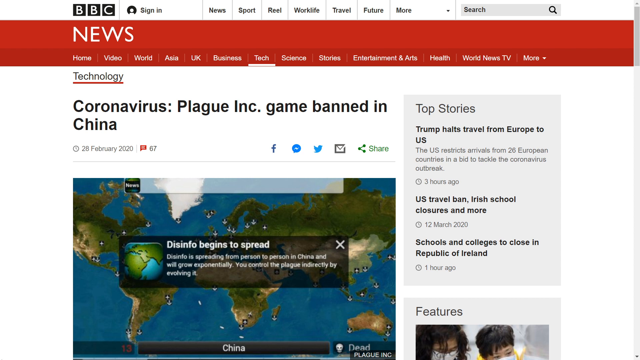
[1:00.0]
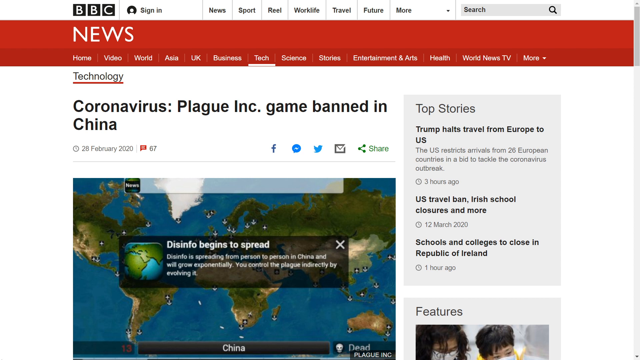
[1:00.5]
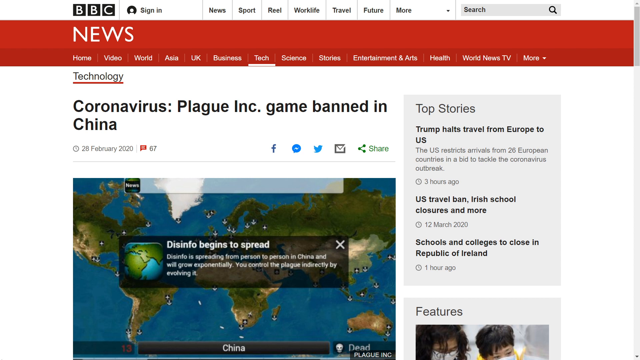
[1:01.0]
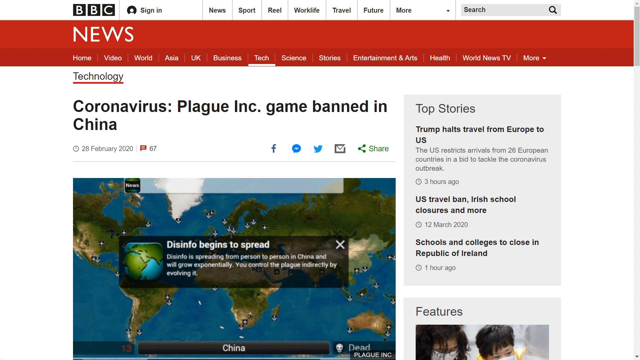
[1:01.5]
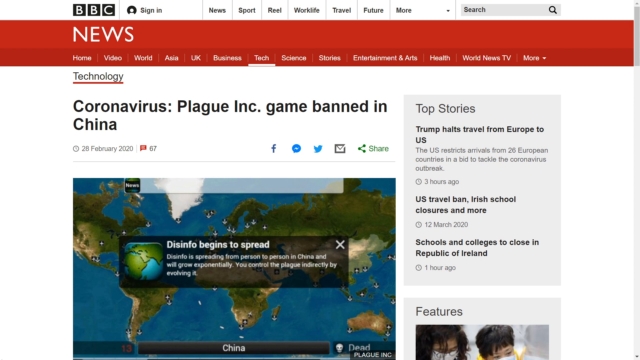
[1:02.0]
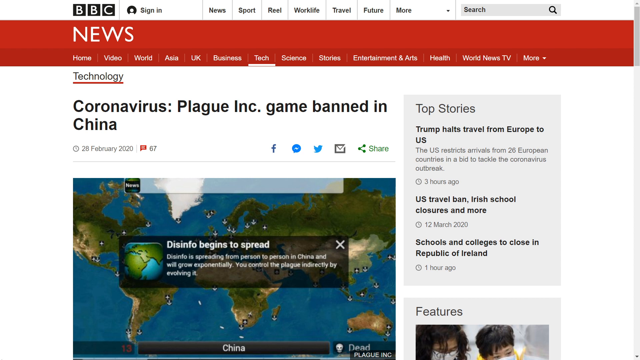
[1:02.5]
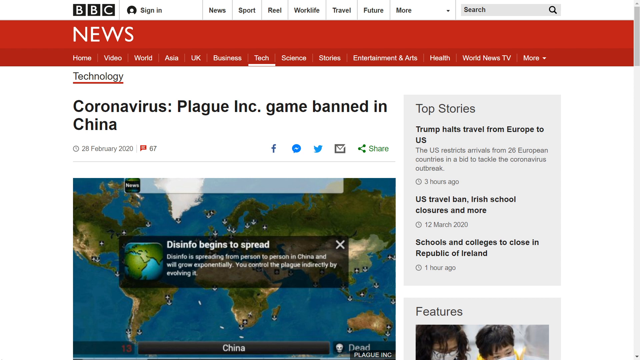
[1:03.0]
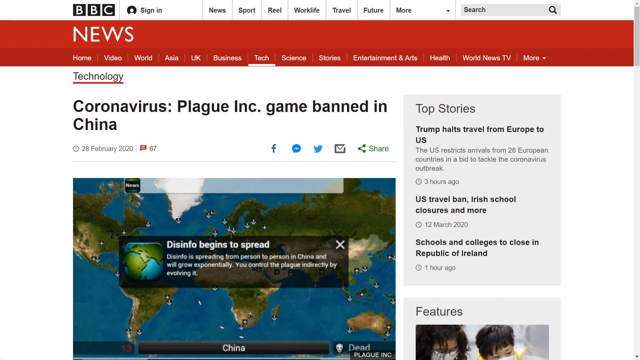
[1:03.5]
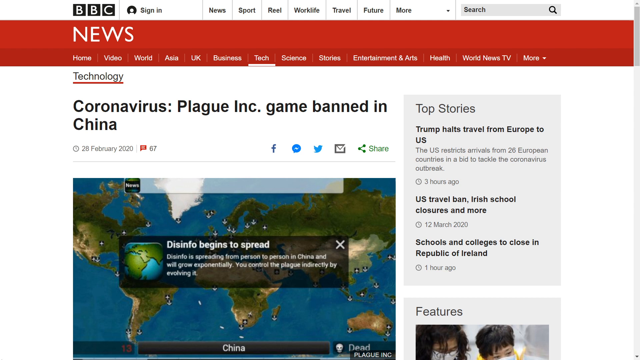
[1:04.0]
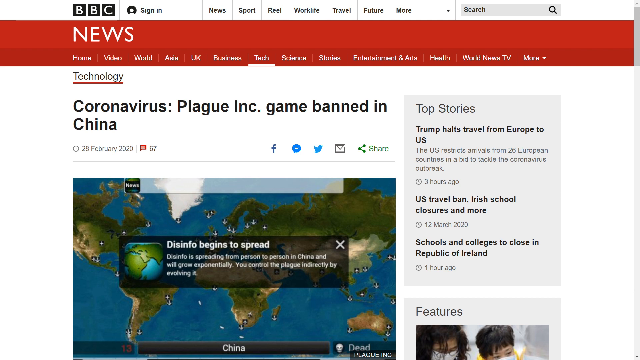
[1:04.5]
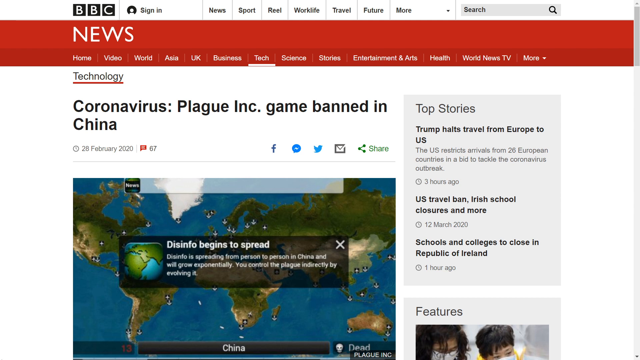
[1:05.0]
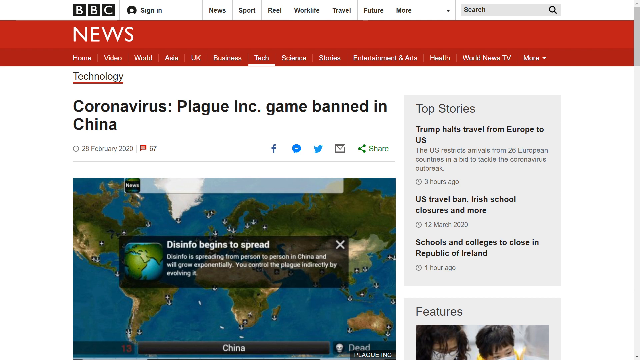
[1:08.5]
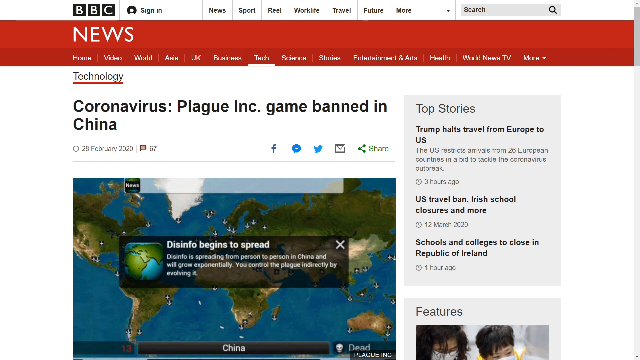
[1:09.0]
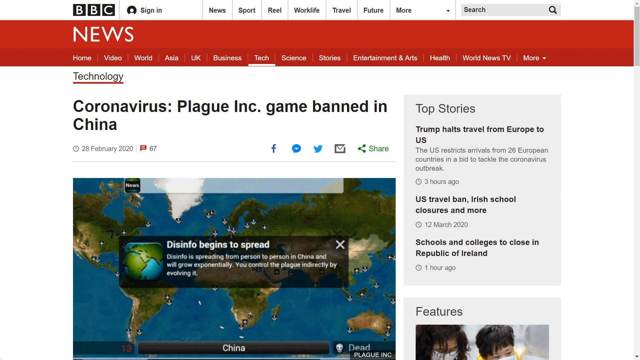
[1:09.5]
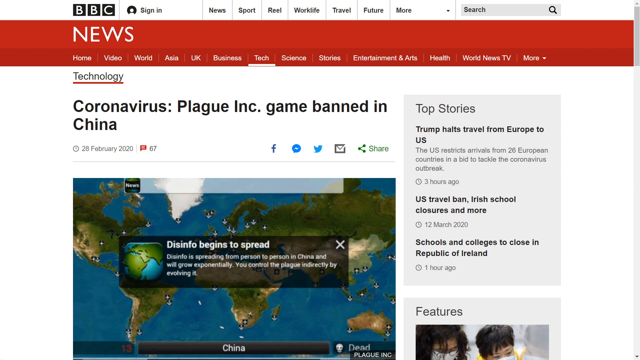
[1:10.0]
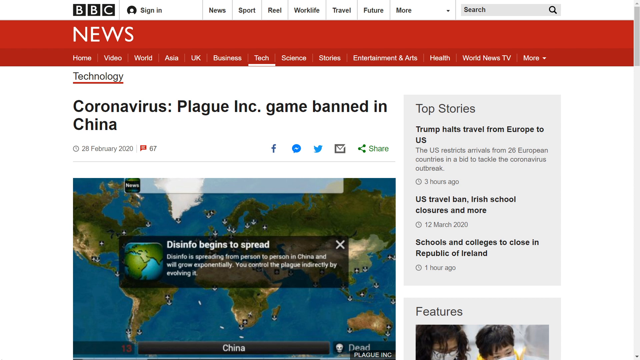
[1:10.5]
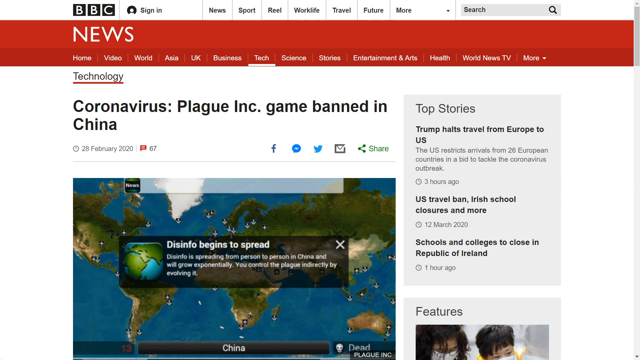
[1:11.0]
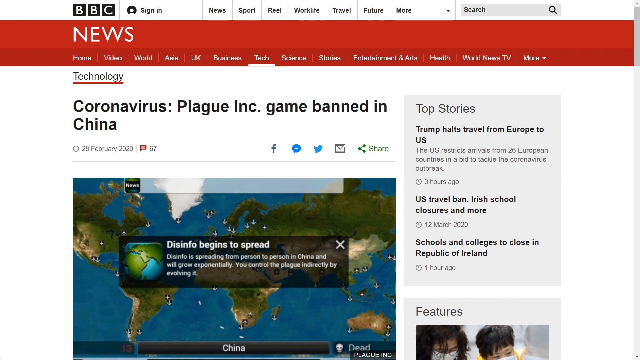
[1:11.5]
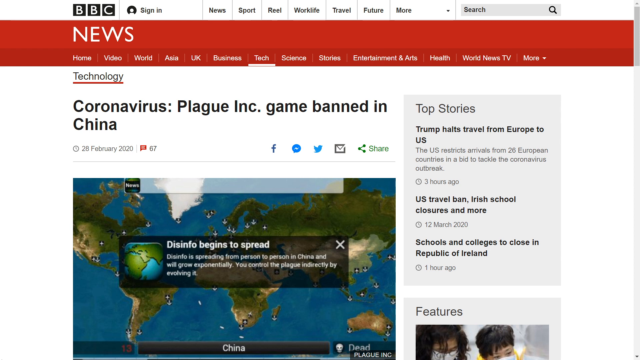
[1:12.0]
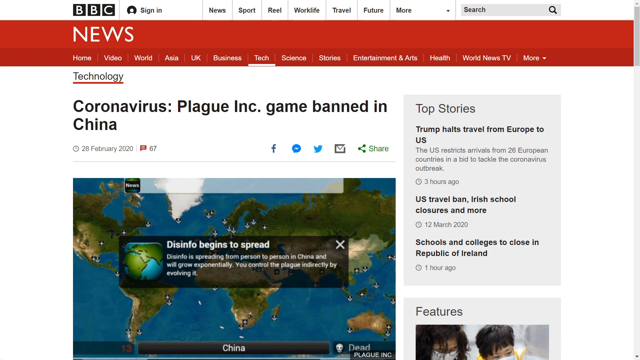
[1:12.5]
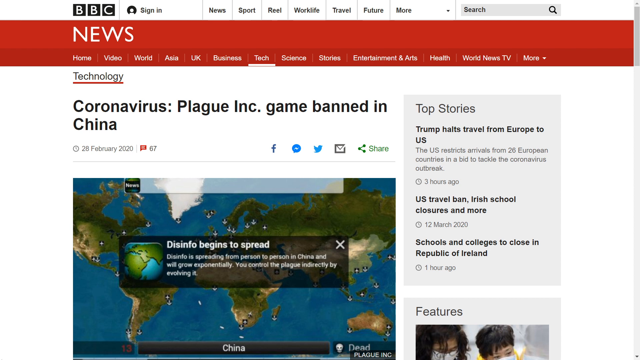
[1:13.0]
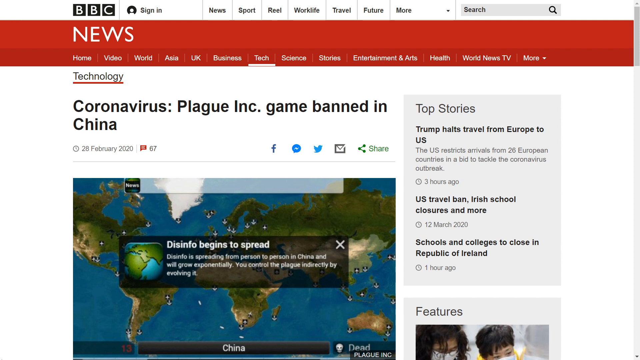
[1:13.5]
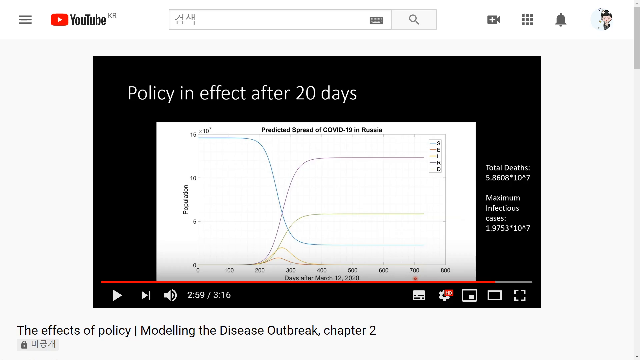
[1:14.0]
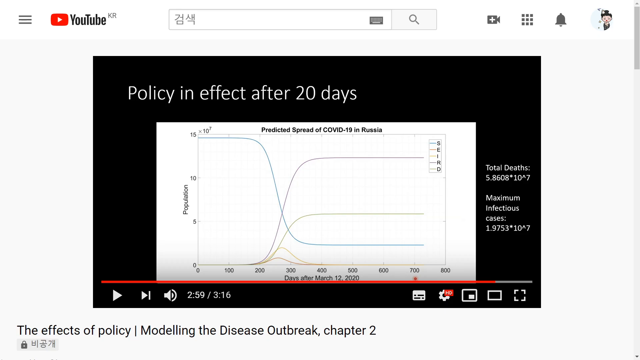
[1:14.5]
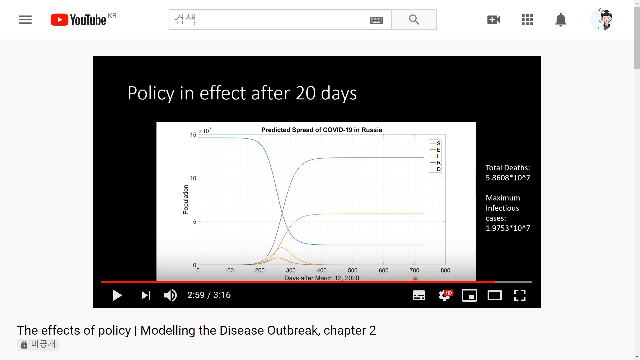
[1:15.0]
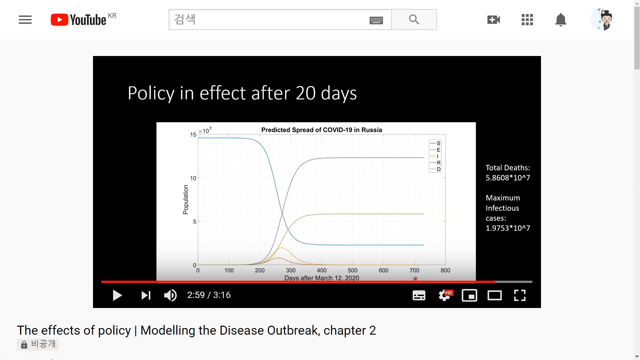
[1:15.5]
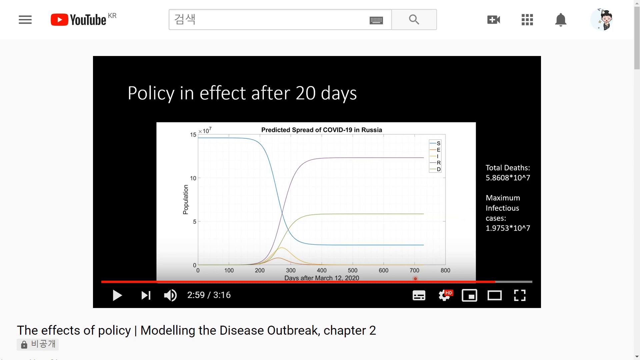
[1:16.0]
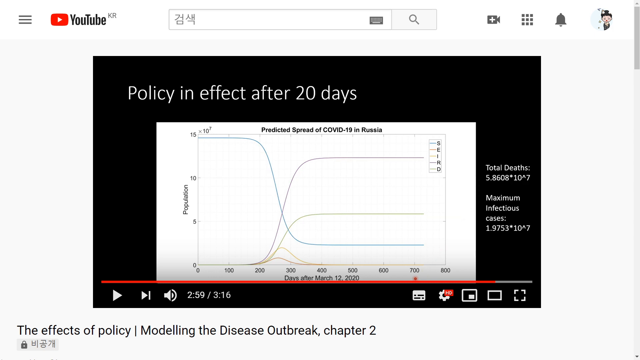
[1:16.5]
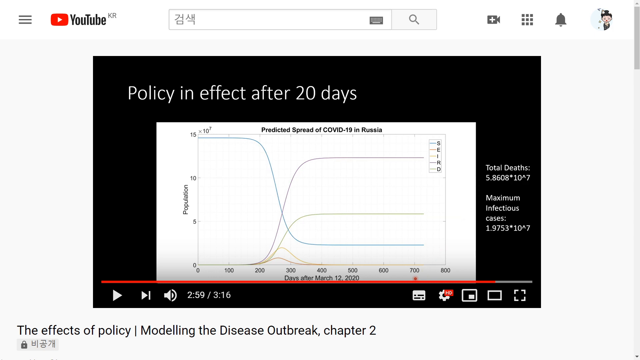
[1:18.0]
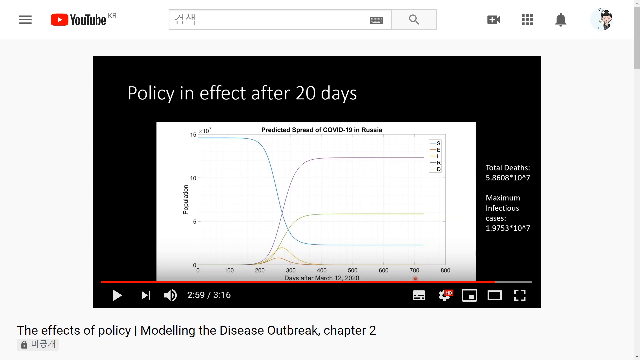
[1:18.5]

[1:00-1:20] A BBC news webpage shows a photo accompanying a news story. The view zooms in on a map of the world in green on a blue background. On the right side are top stories: "Trump halts travel from Europe to US", with "the US restricts arrival from 26 European countries in a bid to tackle the coronavirus outbreak", and, marked 3 hours ago, "US travel ban, Irish school closures and more", noting that on 12th March 2020 schools and colleges closed in the Republic of Ireland. Below the top stories is a features section, where two faces appear, both in face masks. Then a chart appears with the title "policy in effect after 20 days" and "predicted spread of COVID-19 in Russia", showing total deaths of 5.8608 × 10^7 and maximum infection cases of 1.9753 × 10^7.